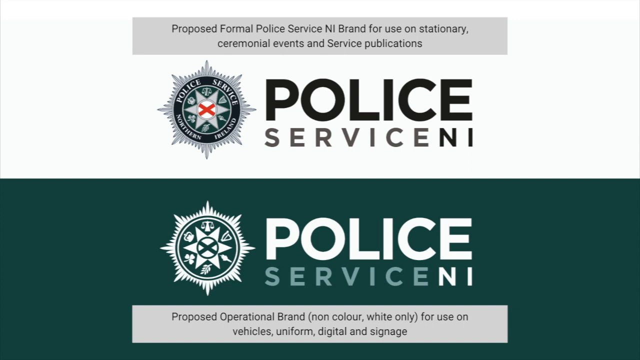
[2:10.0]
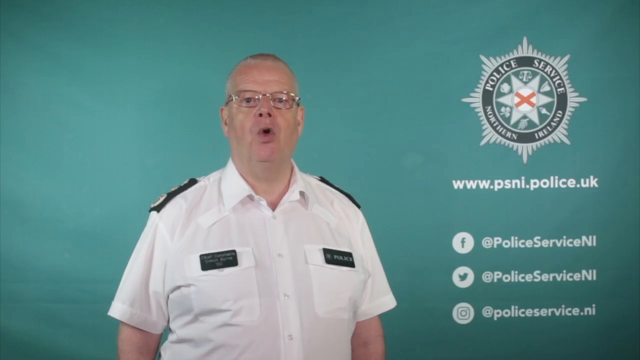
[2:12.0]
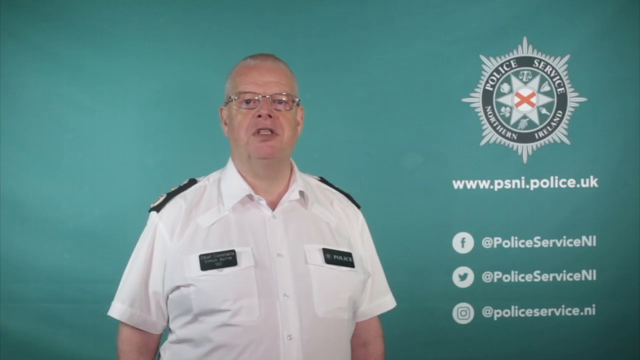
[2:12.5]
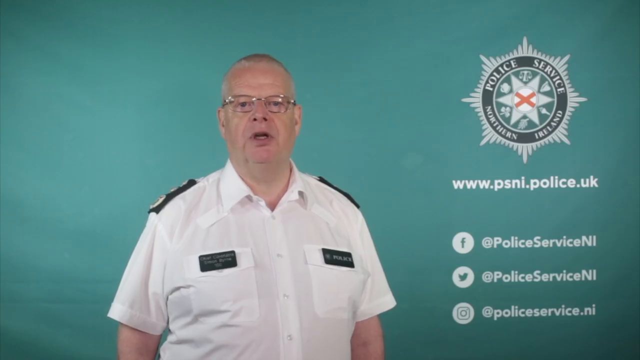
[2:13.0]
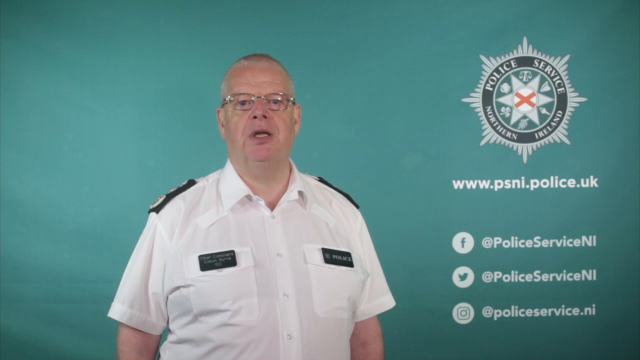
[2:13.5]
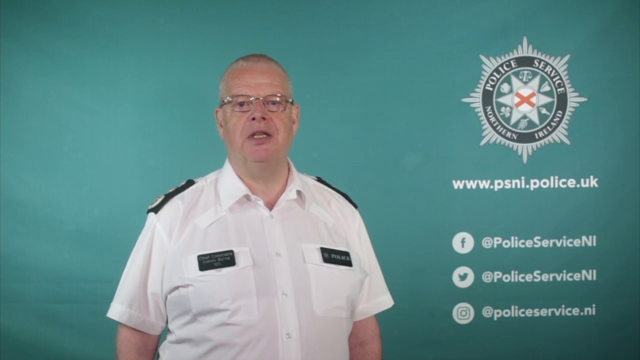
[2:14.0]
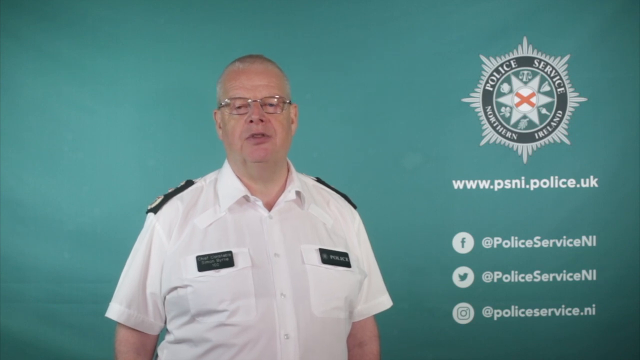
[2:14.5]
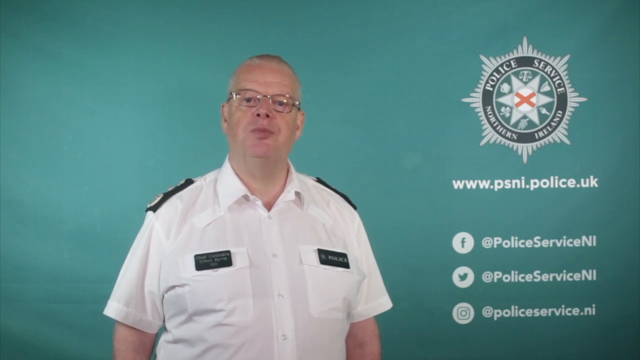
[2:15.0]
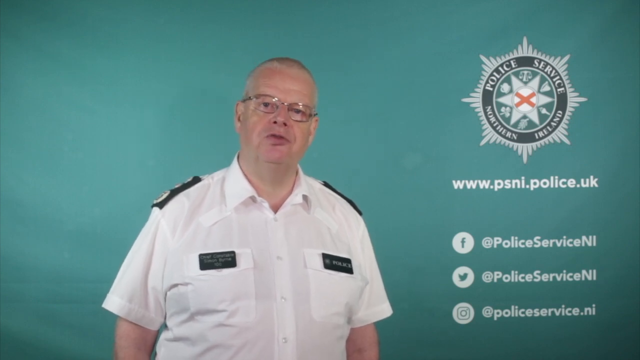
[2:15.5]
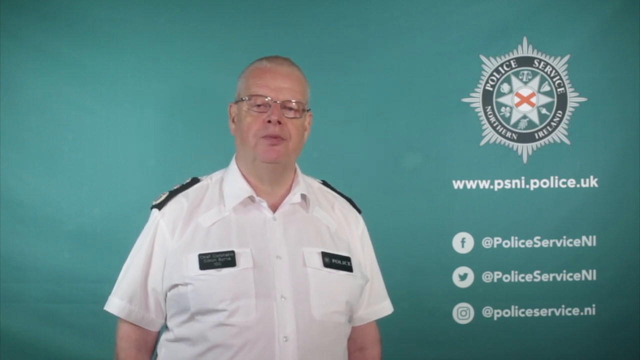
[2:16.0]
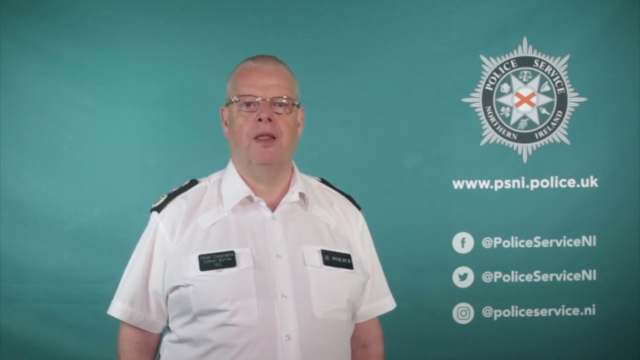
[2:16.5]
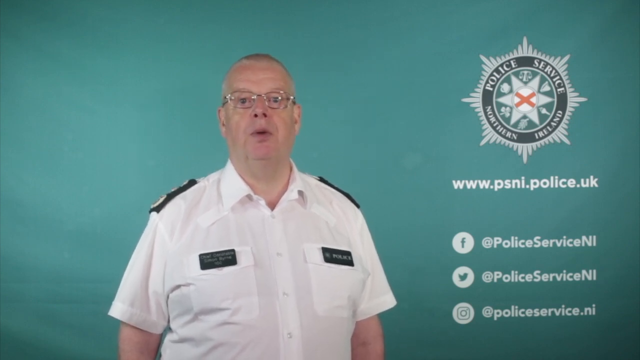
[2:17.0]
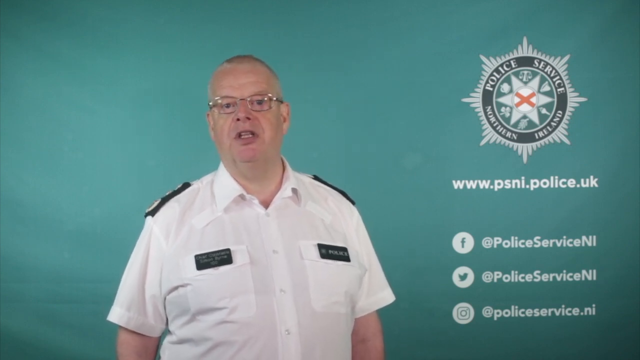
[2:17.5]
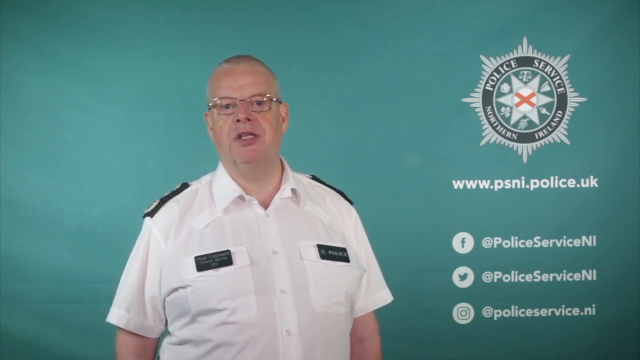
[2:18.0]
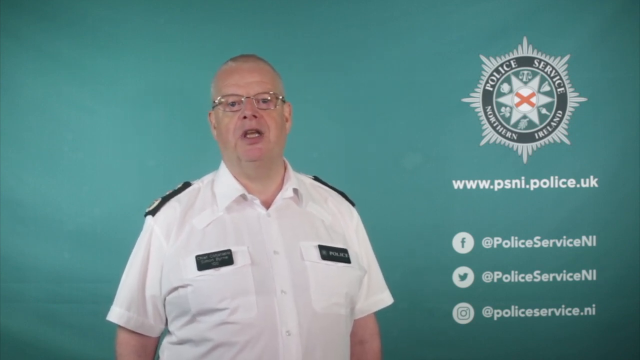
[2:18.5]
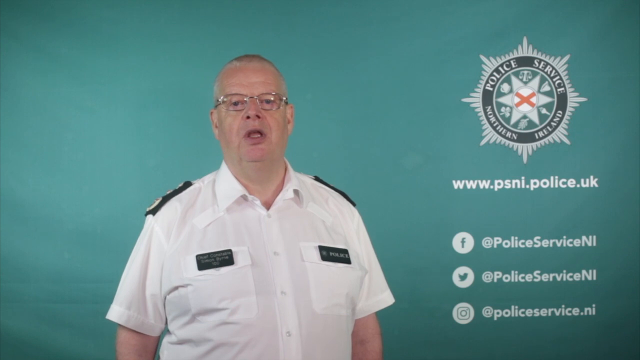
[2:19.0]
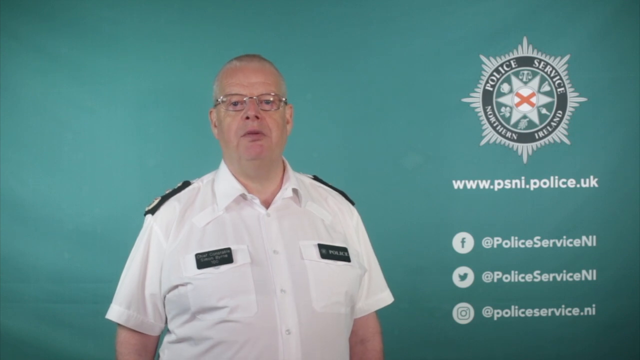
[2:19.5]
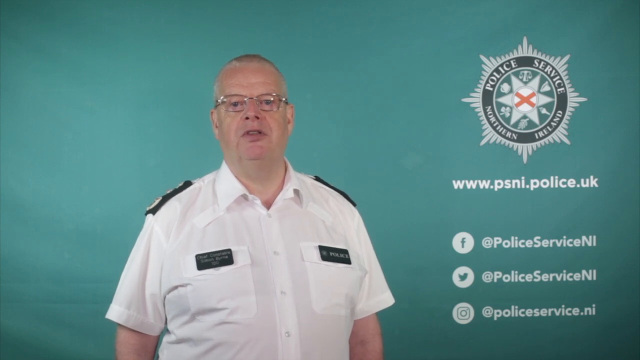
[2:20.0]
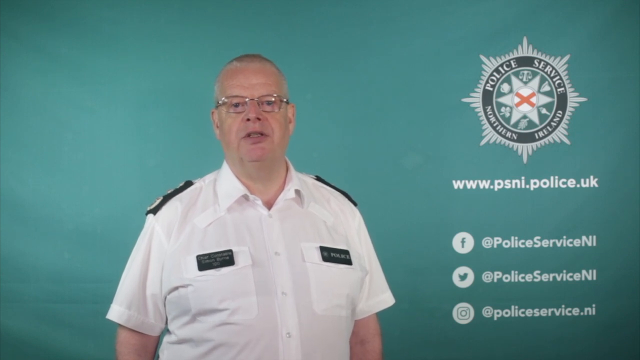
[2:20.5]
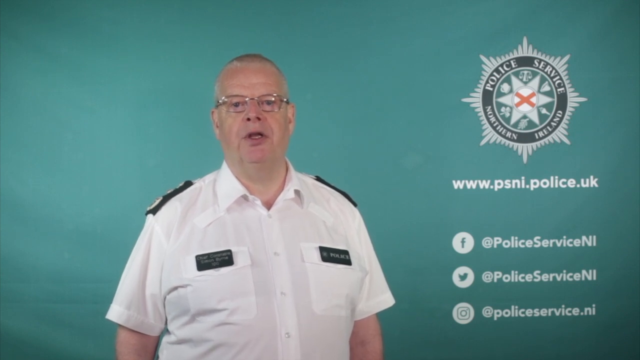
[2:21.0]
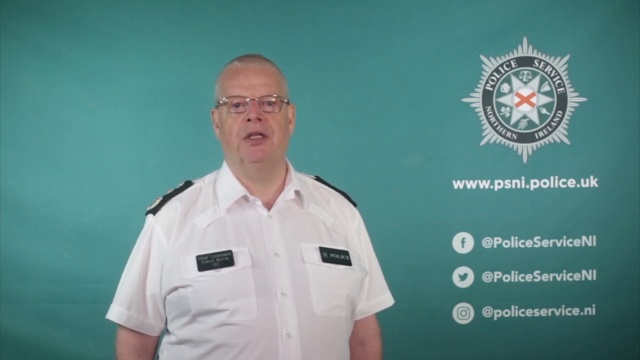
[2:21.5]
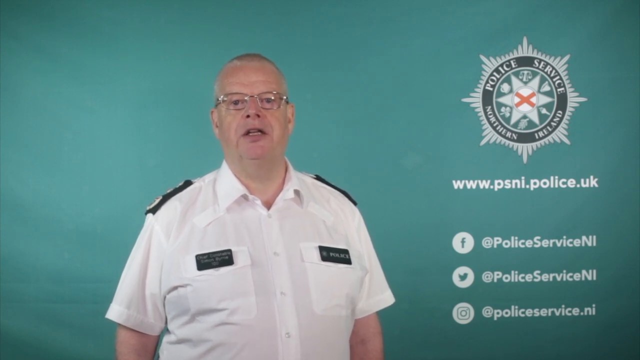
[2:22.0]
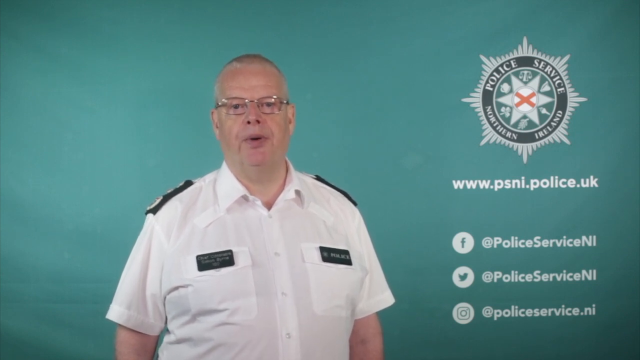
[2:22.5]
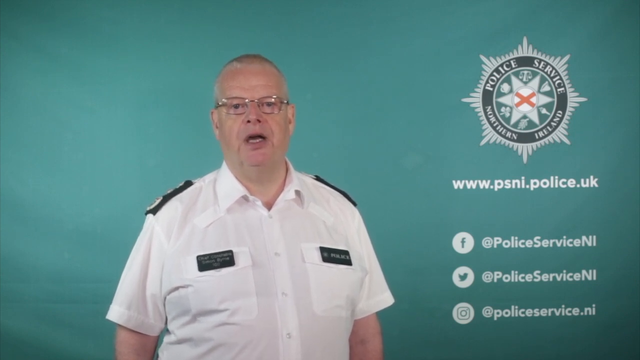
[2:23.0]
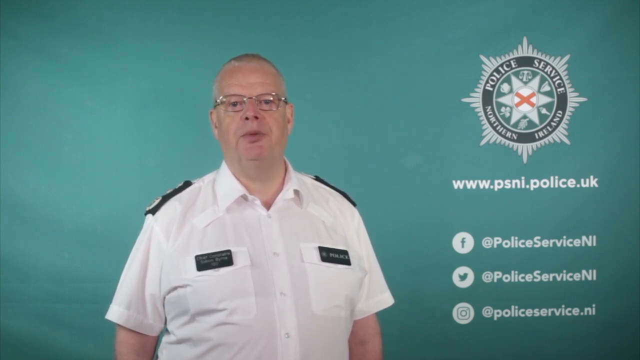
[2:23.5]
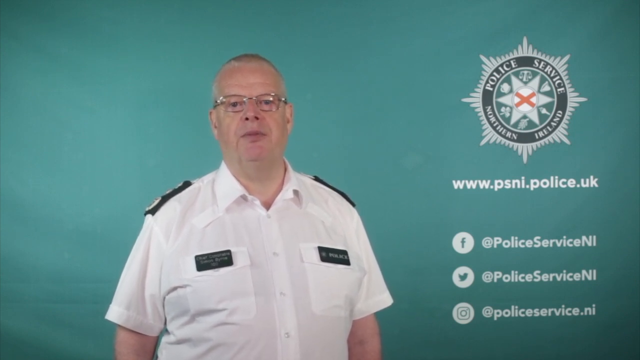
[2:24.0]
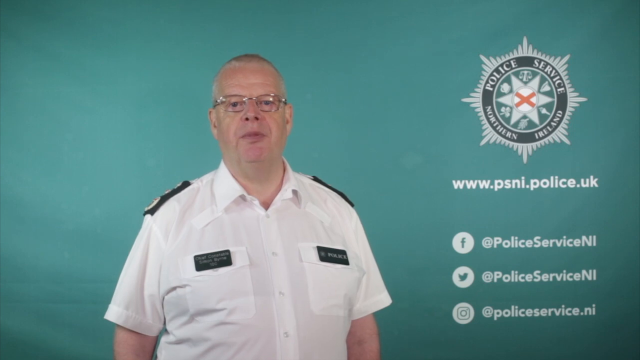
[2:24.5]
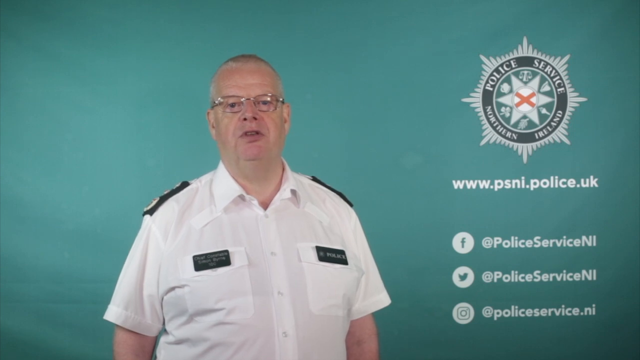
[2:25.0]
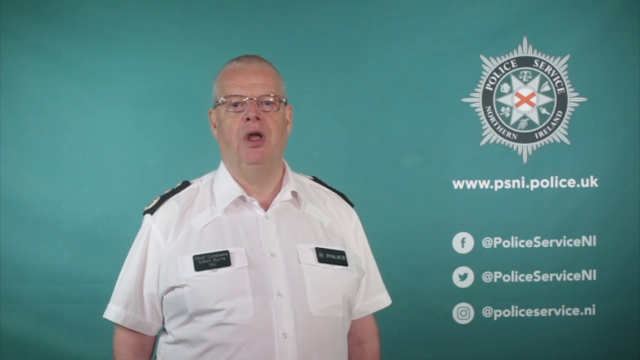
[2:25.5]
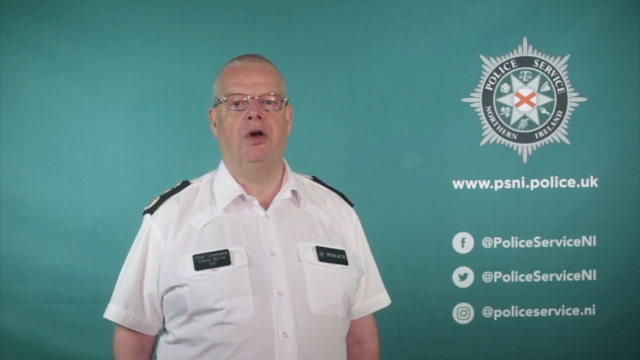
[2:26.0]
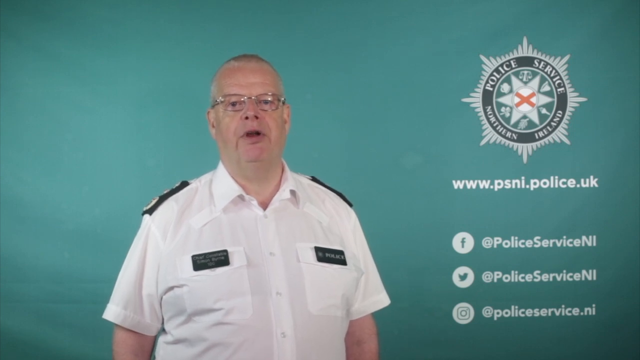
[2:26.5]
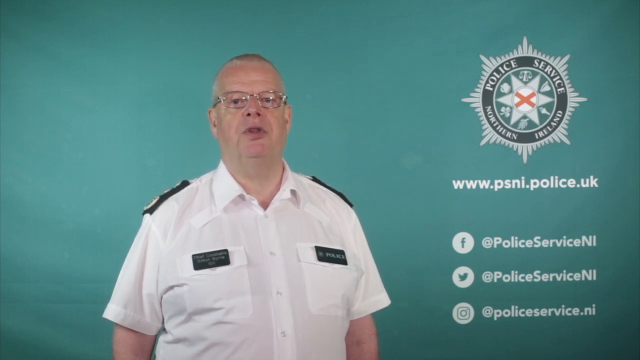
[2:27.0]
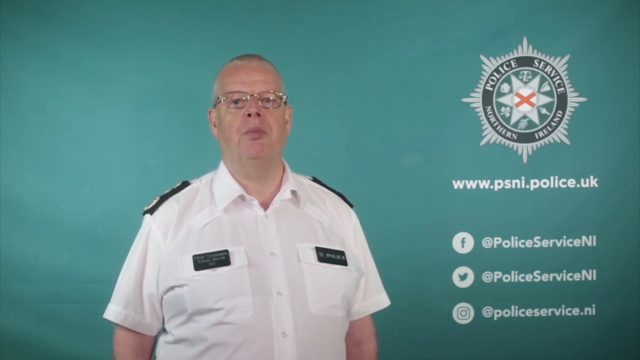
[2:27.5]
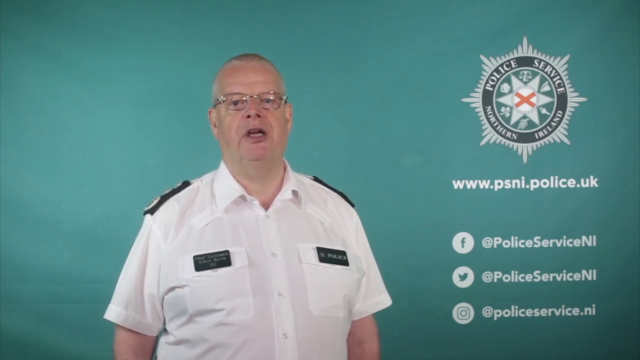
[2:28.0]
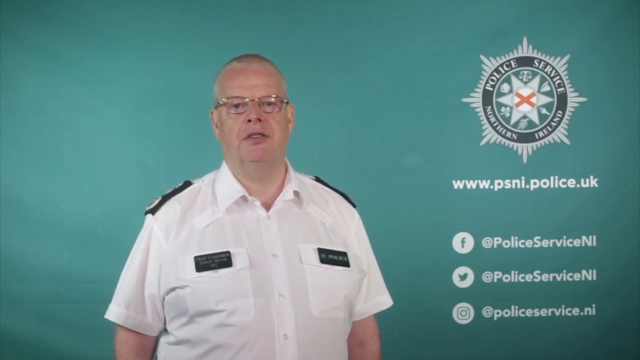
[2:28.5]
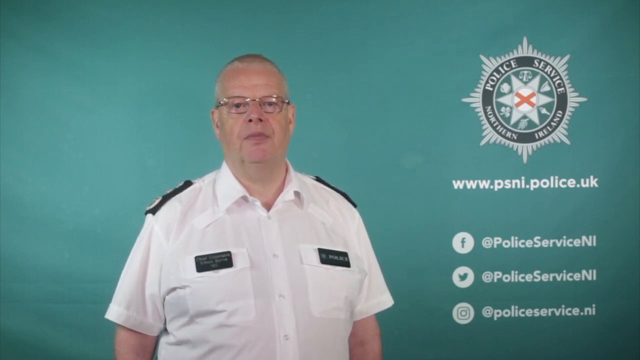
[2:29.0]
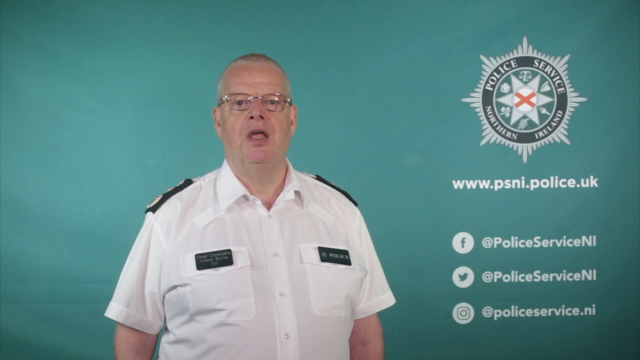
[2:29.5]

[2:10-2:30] The page about the formal police branding designs is on screen, then quickly transitions to the Chief Constable talking in front of the green background. The screen is unchanged from his earlier appearances: he wears the same clothes and the insignia is at the top right of the screen. His movements remain rather dull and unpronounced, with the only real emotion appearing to be disappointment or sternness, little to no hand movement and very little change in facial expression. He simply stands there talking, barely moving. He has patches on his shoulders, a short-sleeved white shirt, glasses and two tags on his chest.